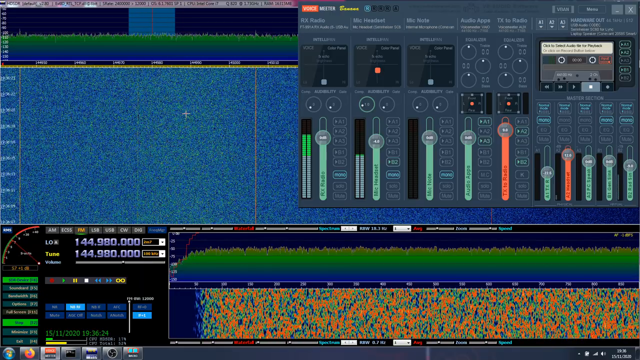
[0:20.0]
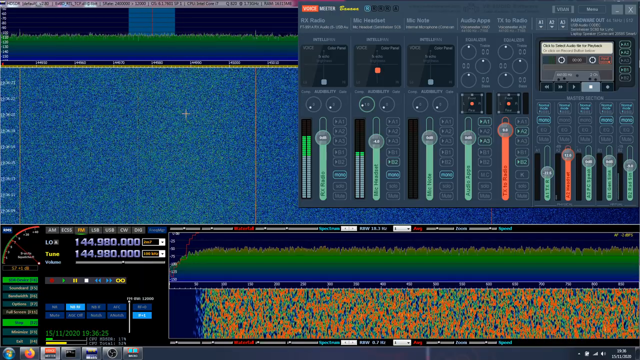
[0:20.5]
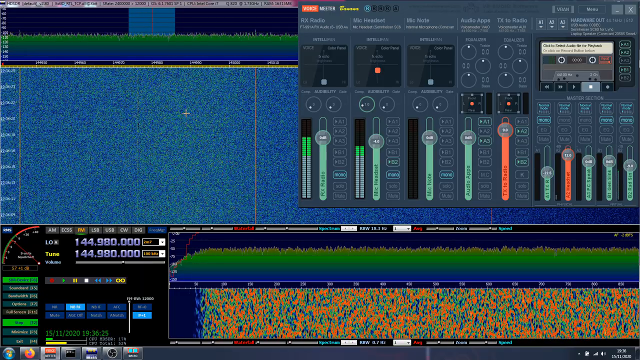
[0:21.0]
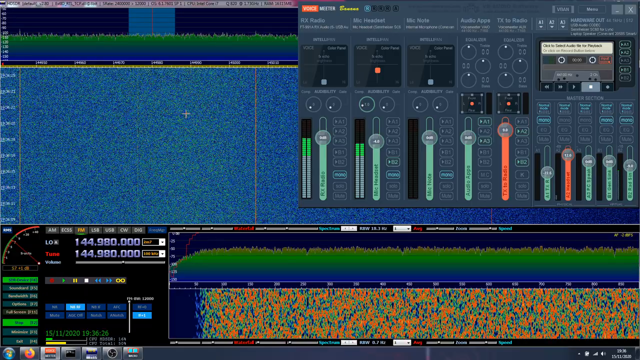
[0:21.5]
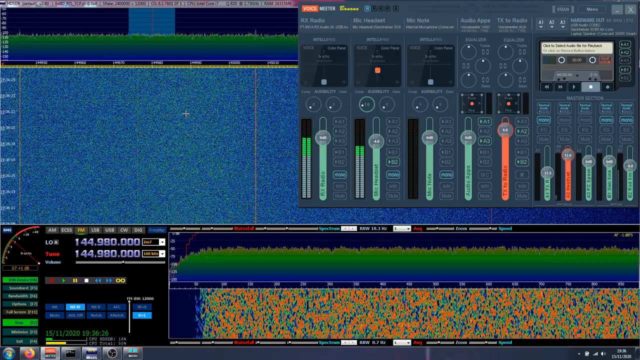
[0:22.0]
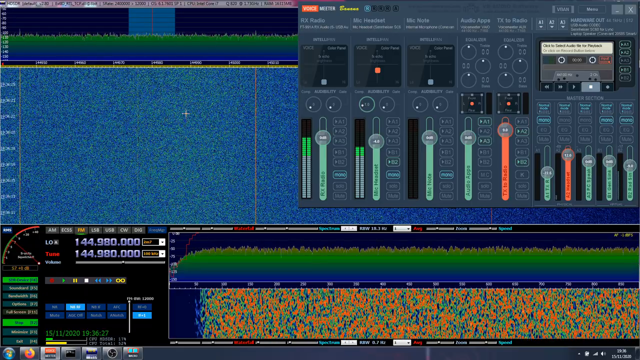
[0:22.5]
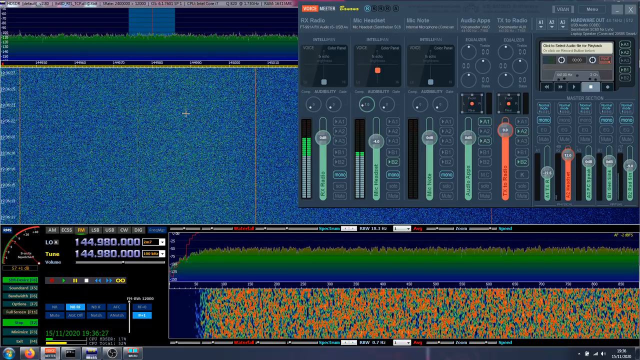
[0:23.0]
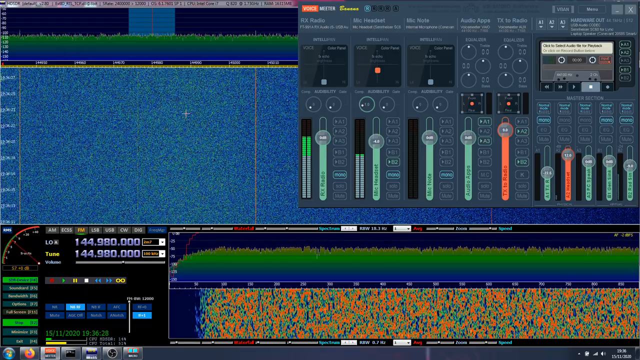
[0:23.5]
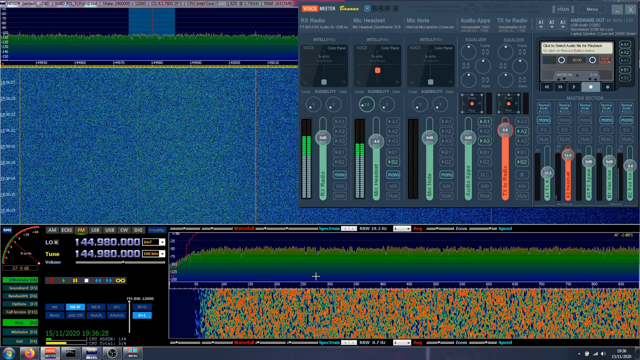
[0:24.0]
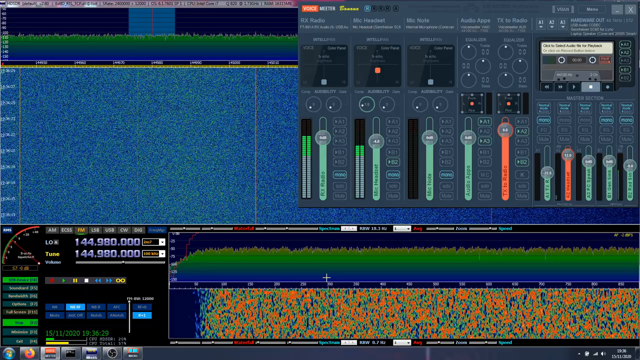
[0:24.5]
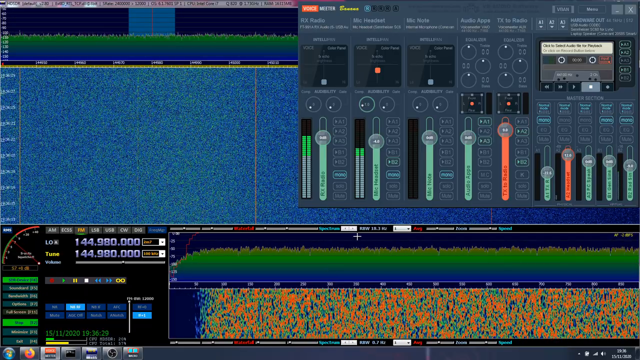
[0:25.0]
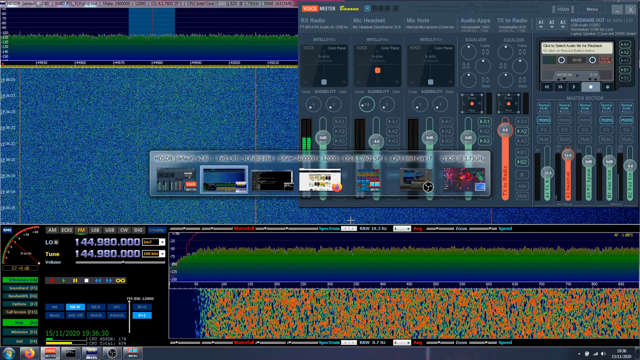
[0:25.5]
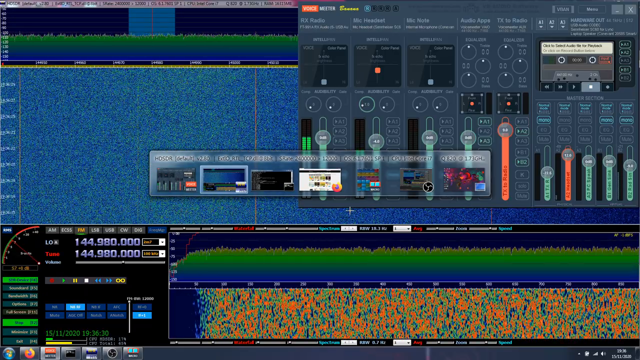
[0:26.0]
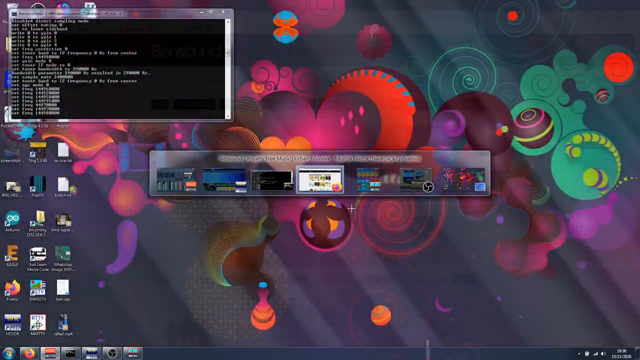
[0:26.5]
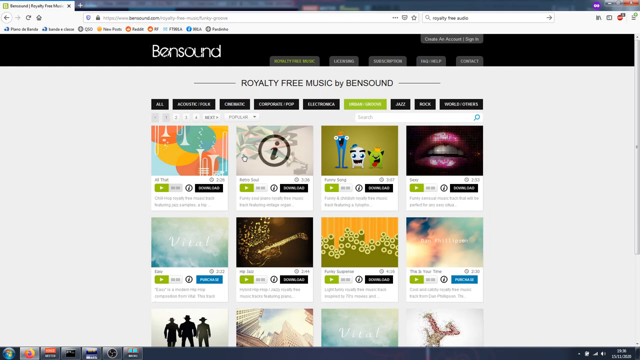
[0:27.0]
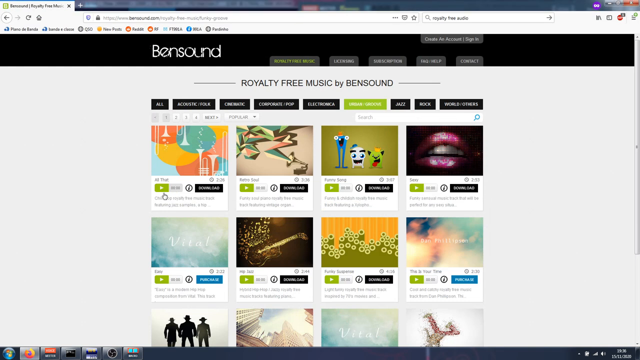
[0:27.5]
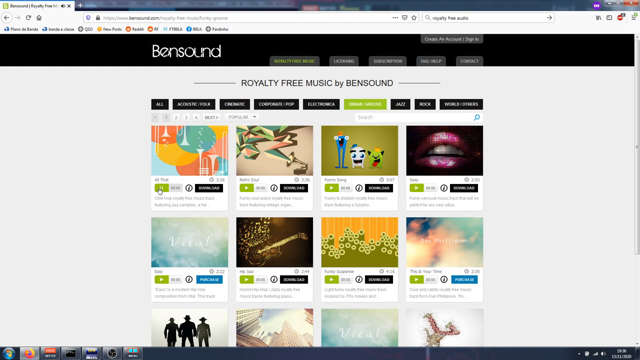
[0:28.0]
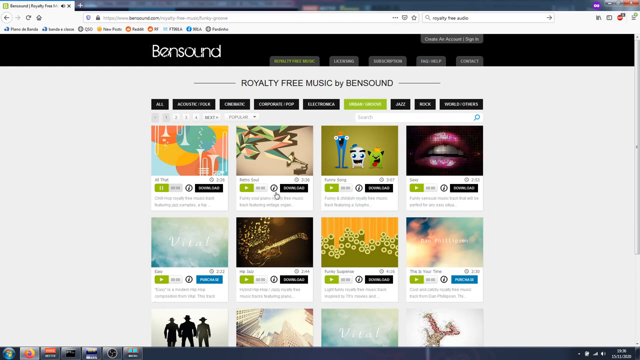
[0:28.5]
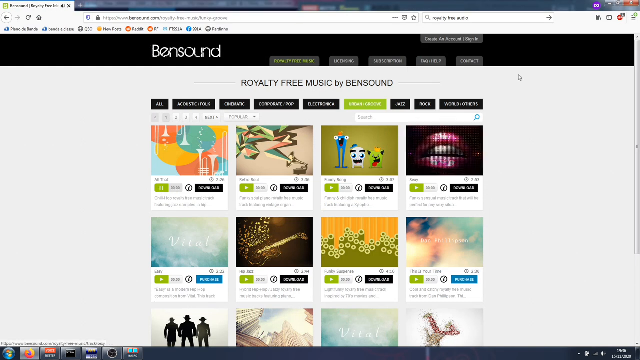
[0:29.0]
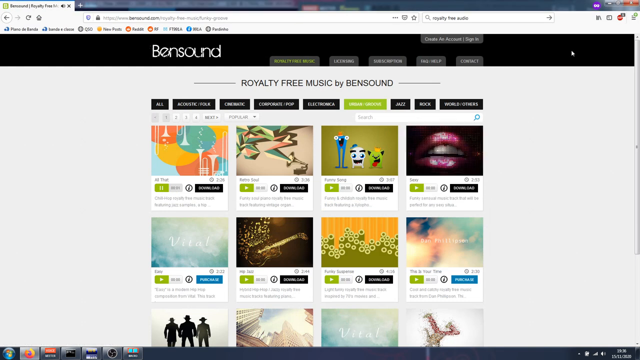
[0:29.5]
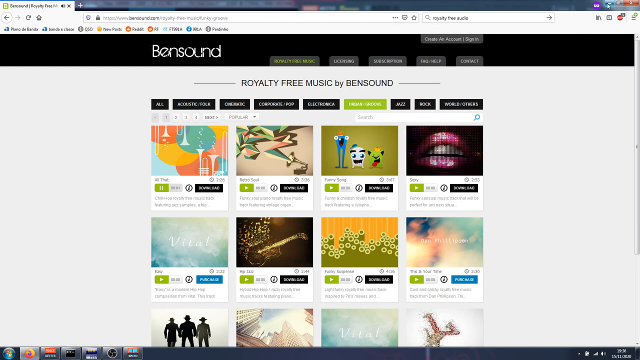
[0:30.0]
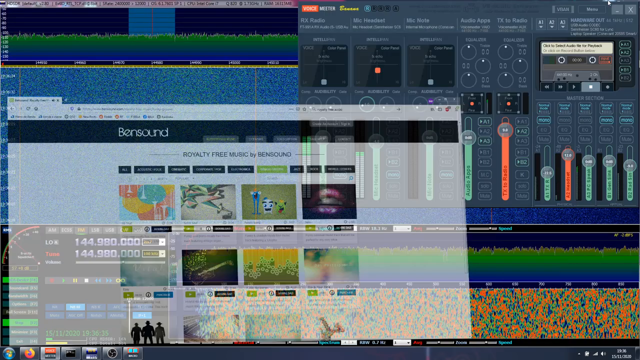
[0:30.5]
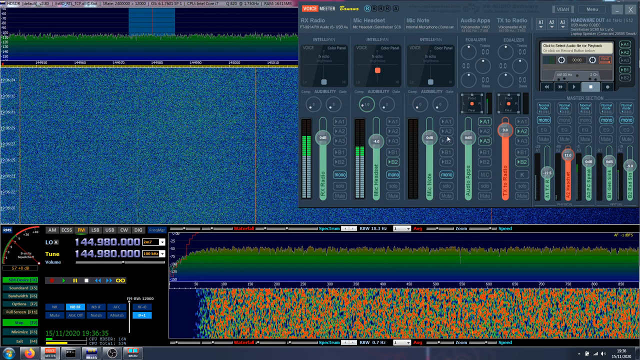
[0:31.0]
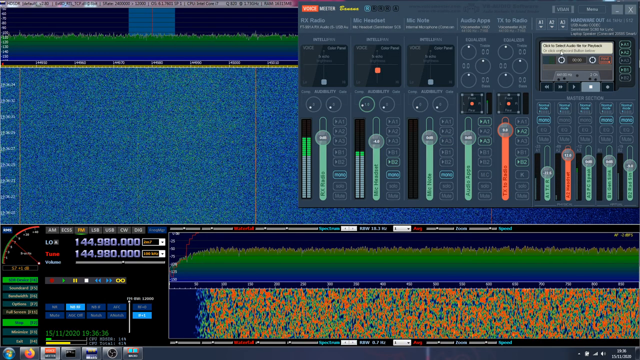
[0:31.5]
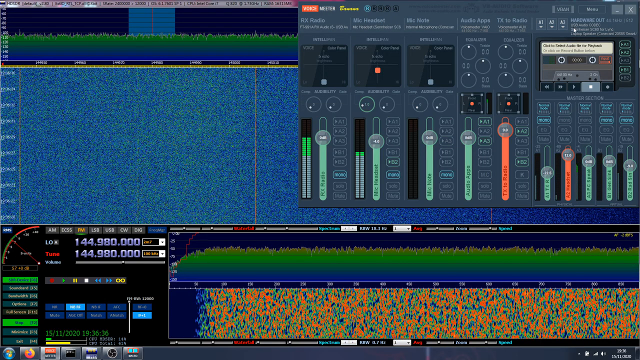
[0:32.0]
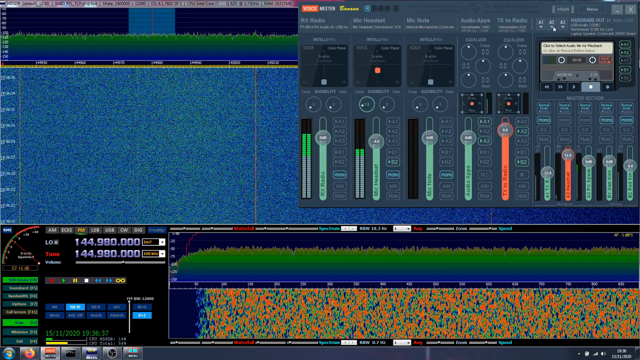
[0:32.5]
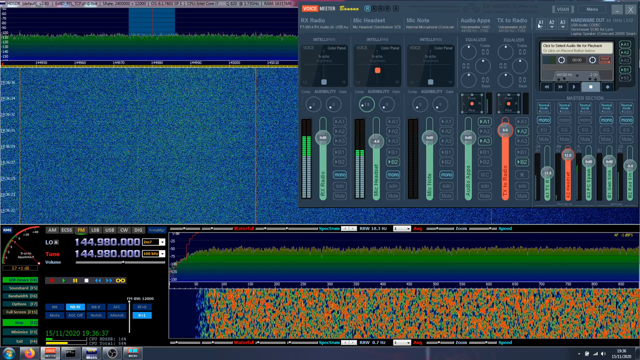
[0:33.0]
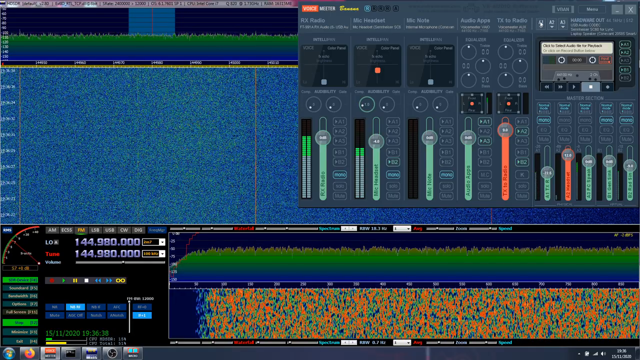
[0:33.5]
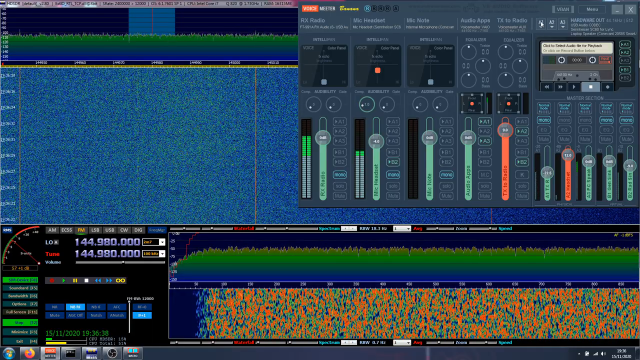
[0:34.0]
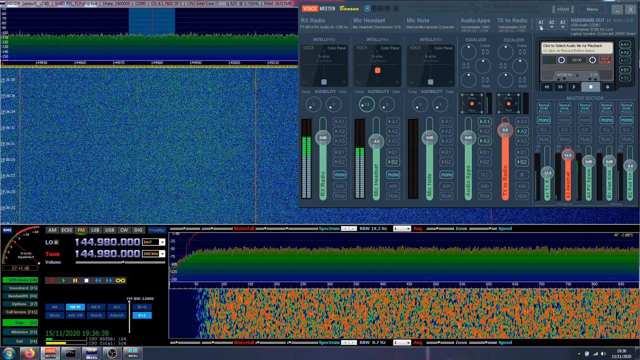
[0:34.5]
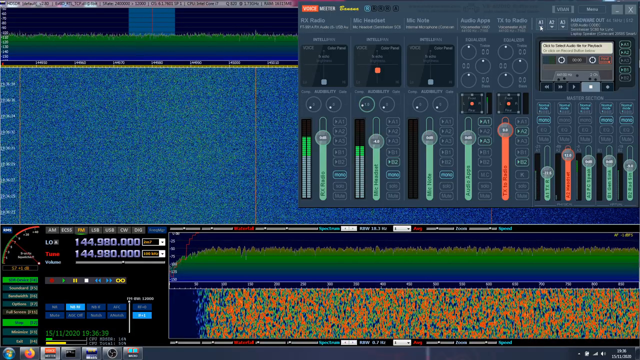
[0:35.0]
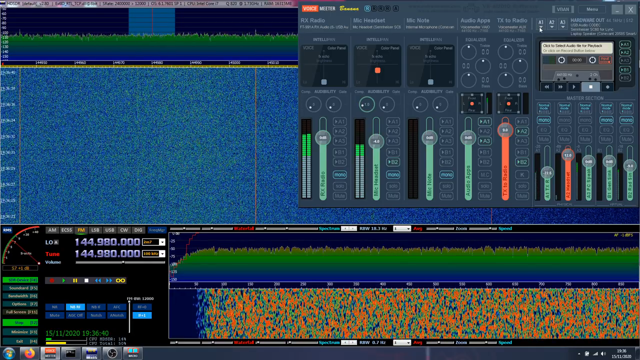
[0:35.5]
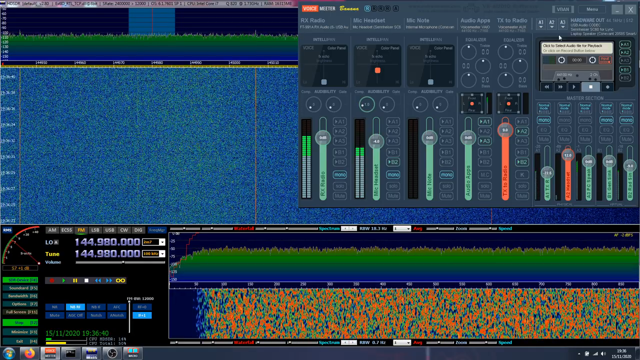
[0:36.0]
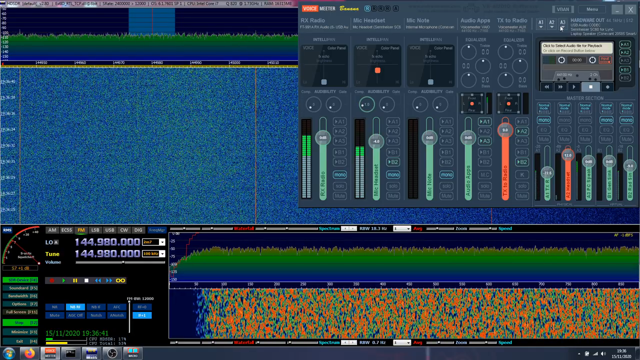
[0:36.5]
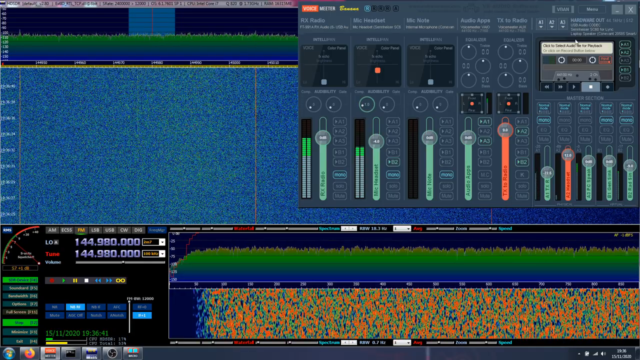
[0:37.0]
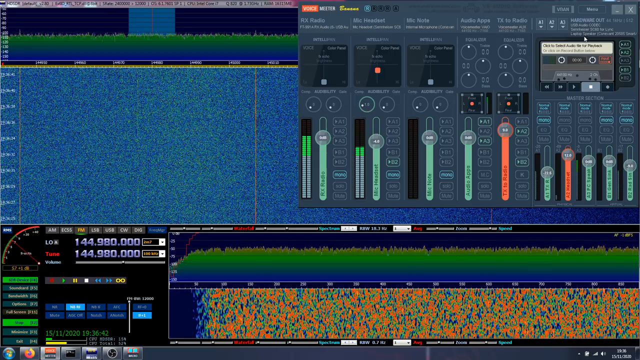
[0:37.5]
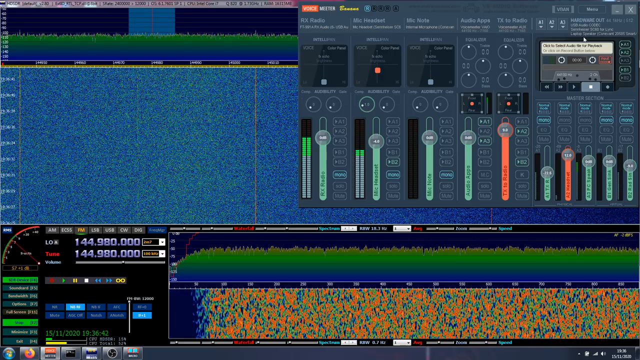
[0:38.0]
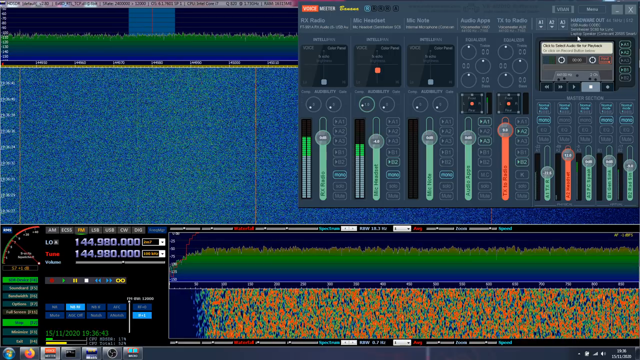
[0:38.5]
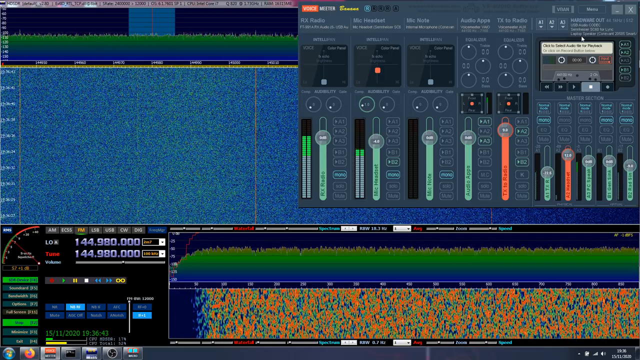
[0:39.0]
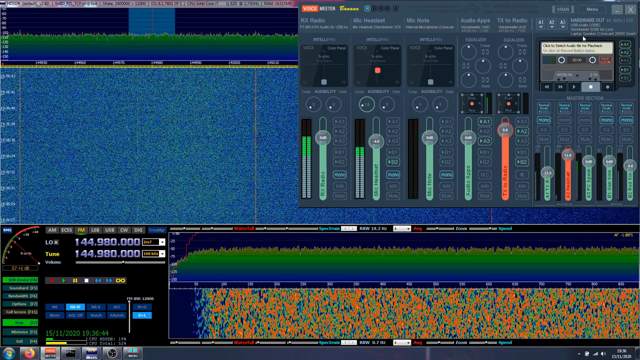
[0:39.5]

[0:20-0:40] The digital audio workstation (DAW) software has a virtual cassette deck in the top right of the screen. The window with the mixer also contains some sort of virtual cassette. The green audio track appears to be an entire song being played and manipulated in the software, possibly with source audio taken from a website and controlled through the tape deck design.